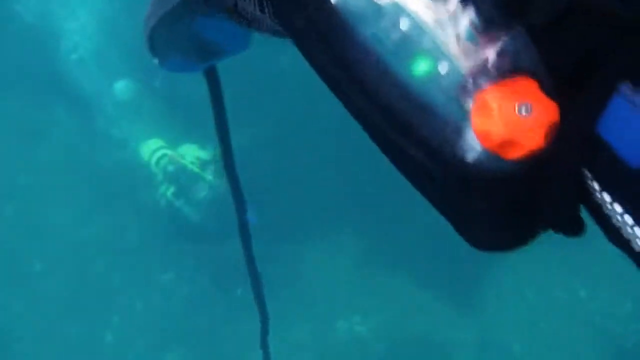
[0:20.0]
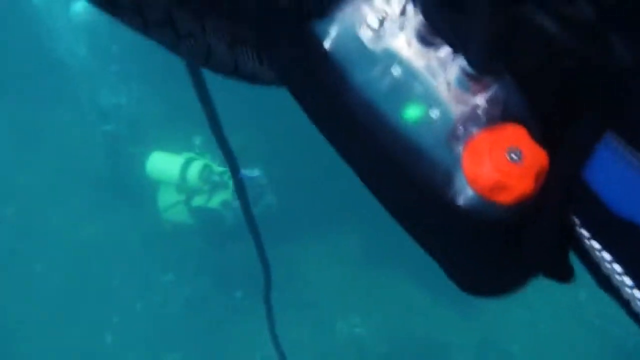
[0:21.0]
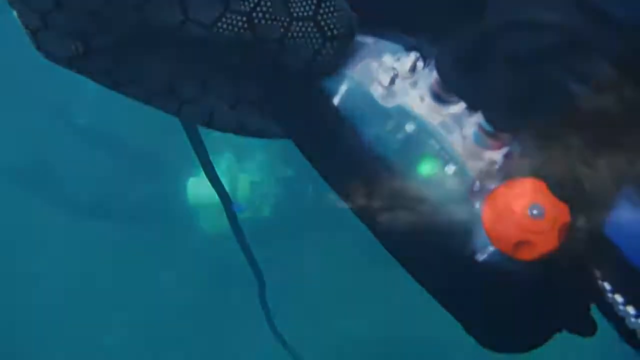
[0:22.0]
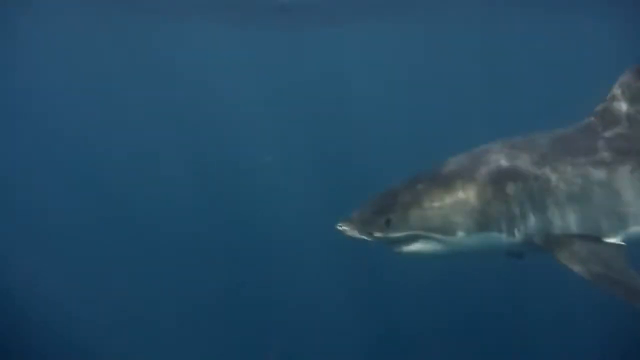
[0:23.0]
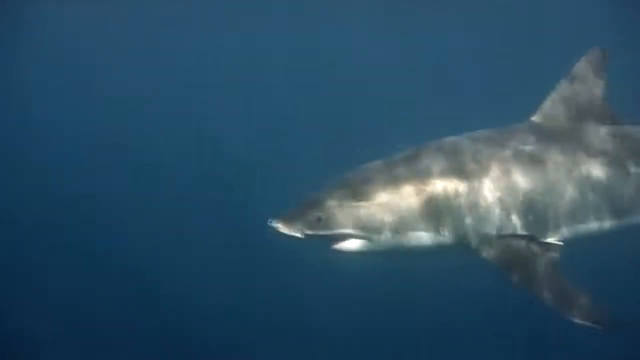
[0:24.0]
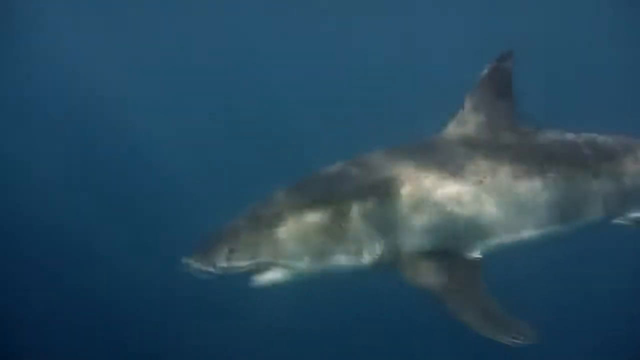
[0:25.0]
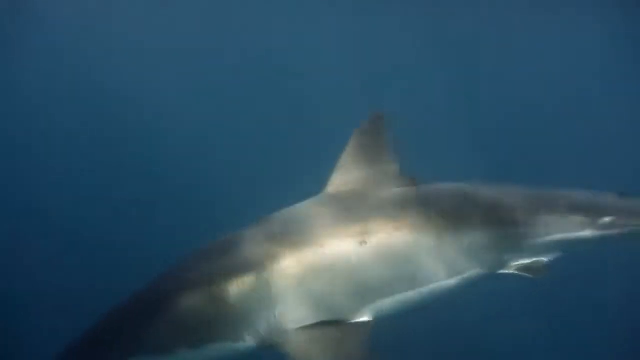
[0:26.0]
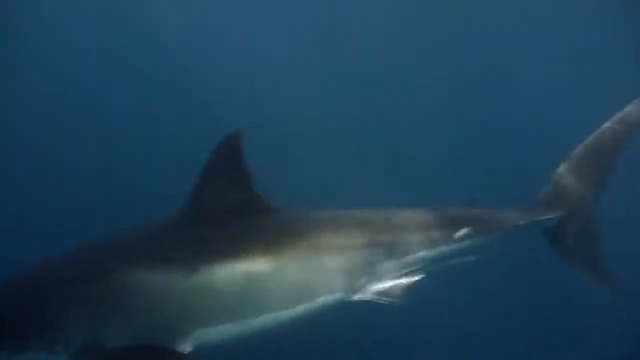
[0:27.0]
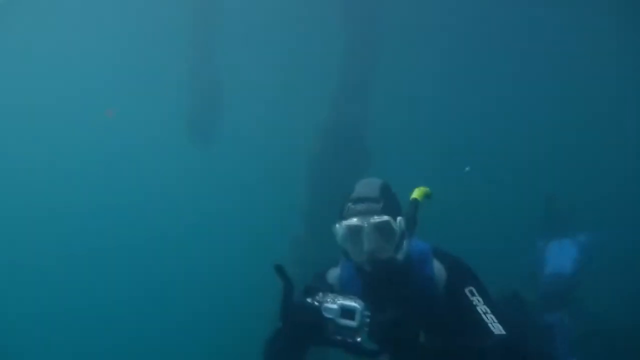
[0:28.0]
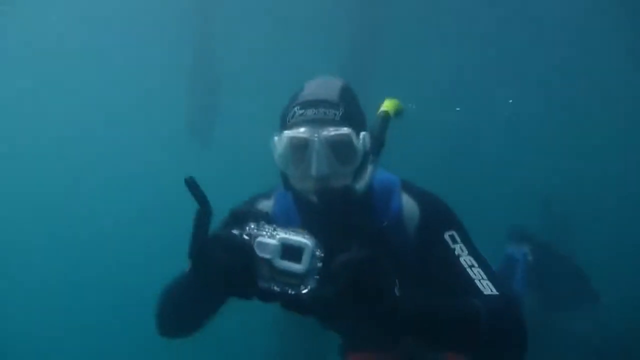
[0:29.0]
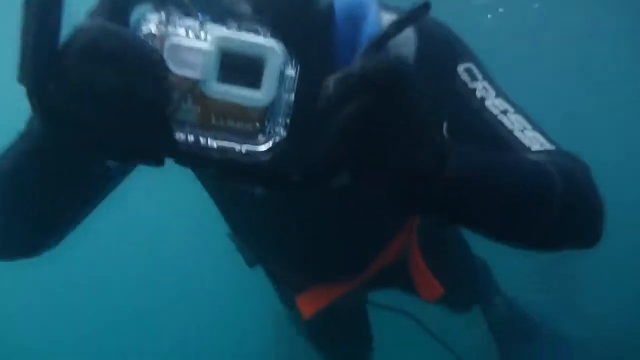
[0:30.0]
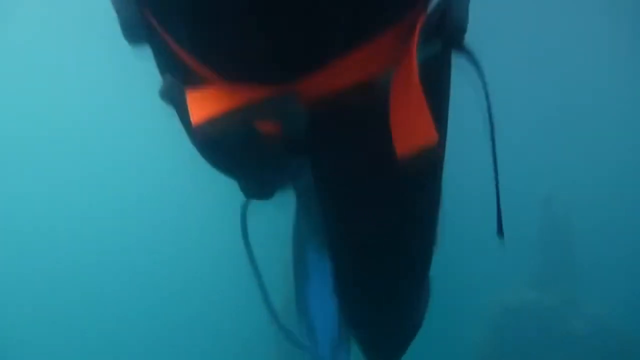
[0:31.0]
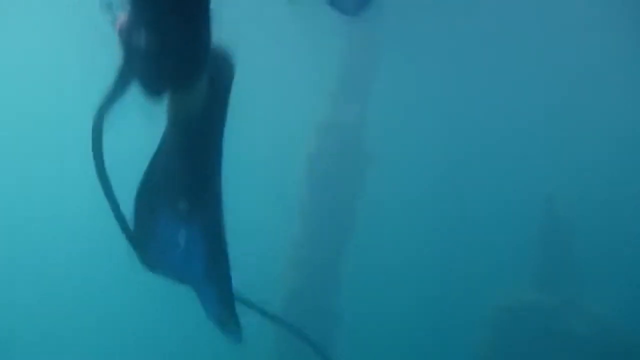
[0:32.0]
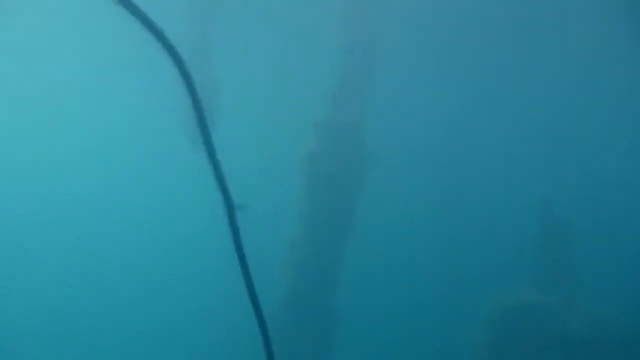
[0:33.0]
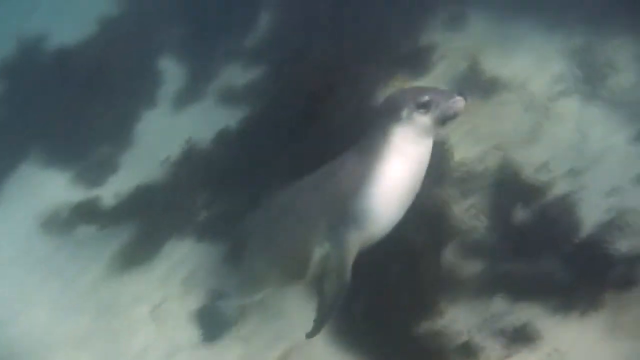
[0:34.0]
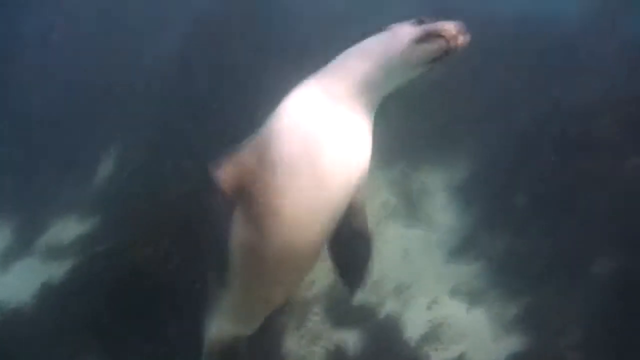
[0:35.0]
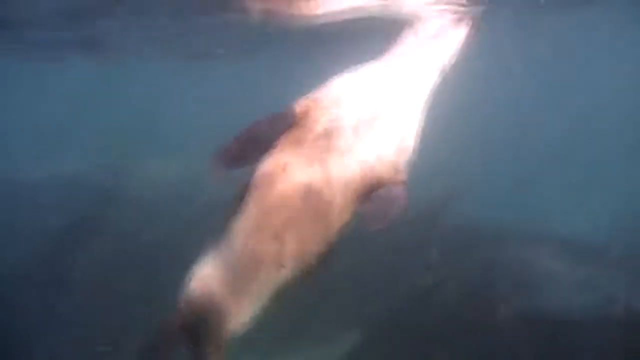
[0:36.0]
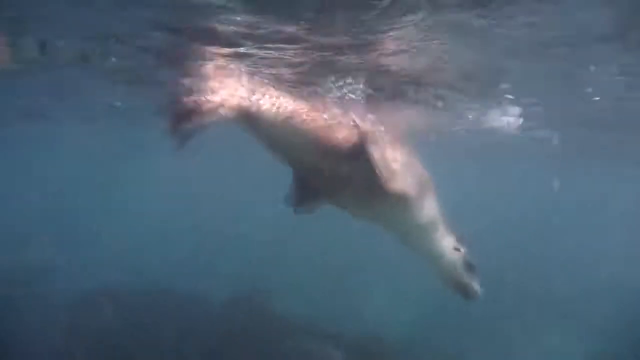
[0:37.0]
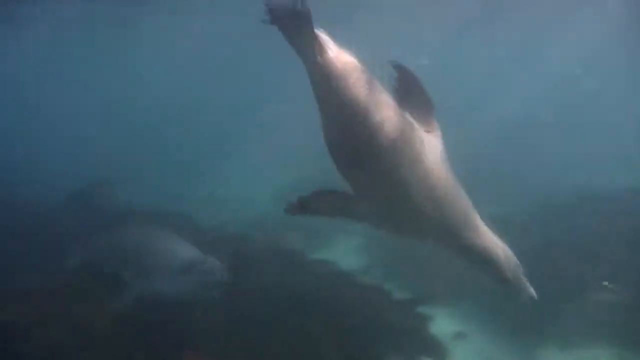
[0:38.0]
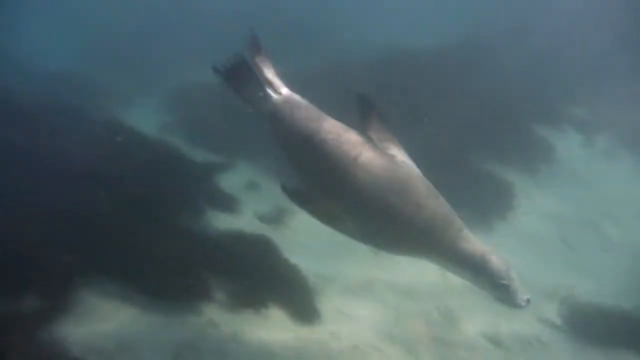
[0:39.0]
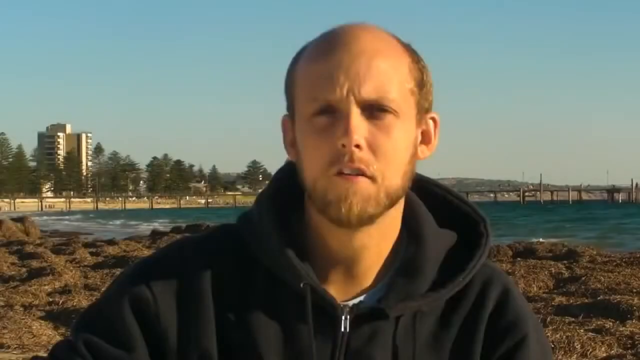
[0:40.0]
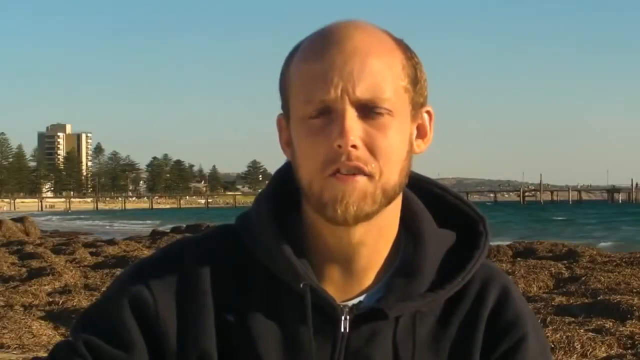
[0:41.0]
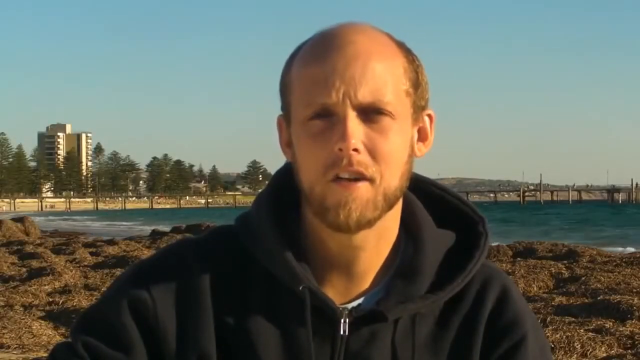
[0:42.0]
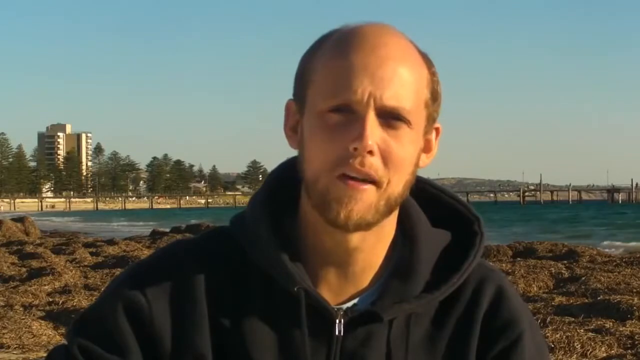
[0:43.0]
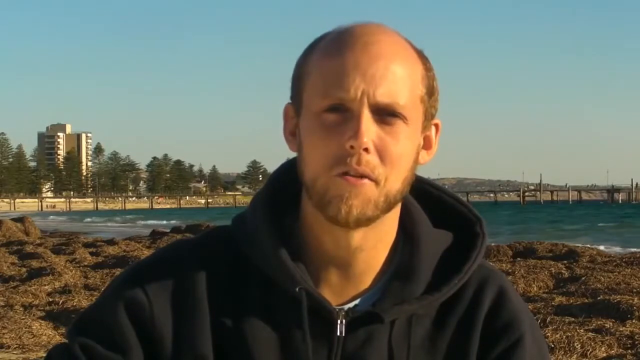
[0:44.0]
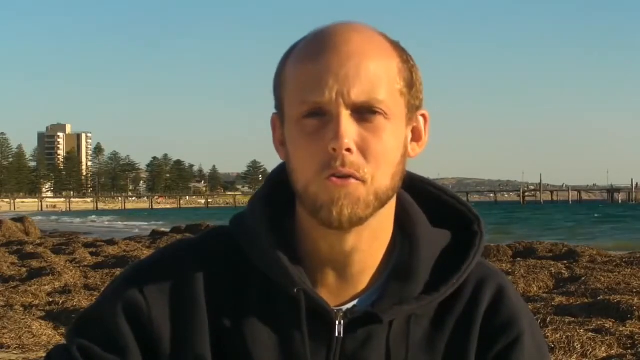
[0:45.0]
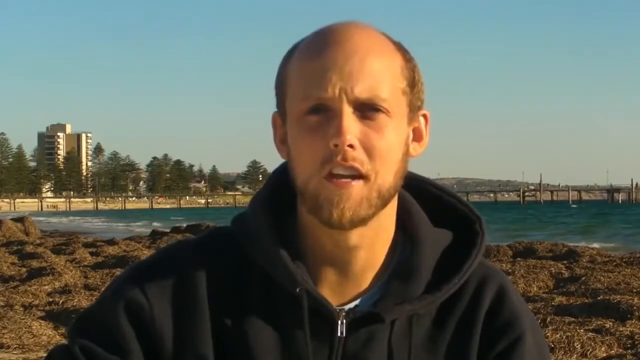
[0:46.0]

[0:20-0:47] The underwater shot continues, and a diver with what looks like a yellow tank and a yellow top half of a diving suit starts to swim; only the tank and the diver's back are visible. This cuts to a shark, possibly a great white, which looks very menacing and angry, with black eyes like doll's eyes; it moves toward the left side of the screen. A diver swims toward the camera, maybe holding a GoPro. He apparently has no oxygen tank but wears a black diving suit and goggles, and his flippers are visible as he passes over the camera. A seal swims upward, breaks the surface briefly, and then swims back downward to the bottom right of the screen. The bald man with the beard and the hoodie comes back on and briefly says a few words.